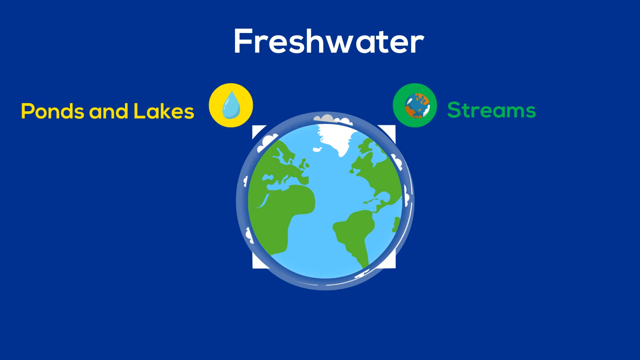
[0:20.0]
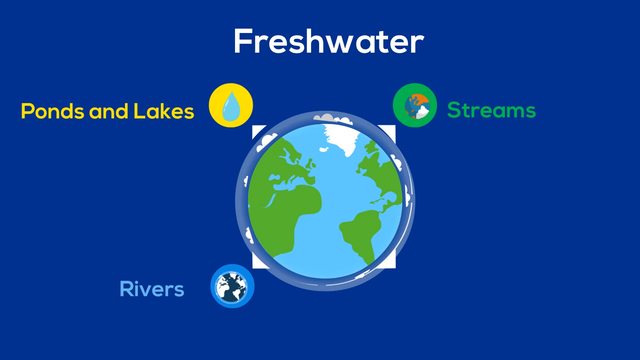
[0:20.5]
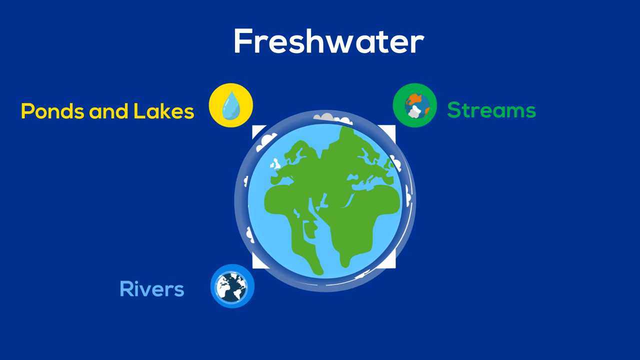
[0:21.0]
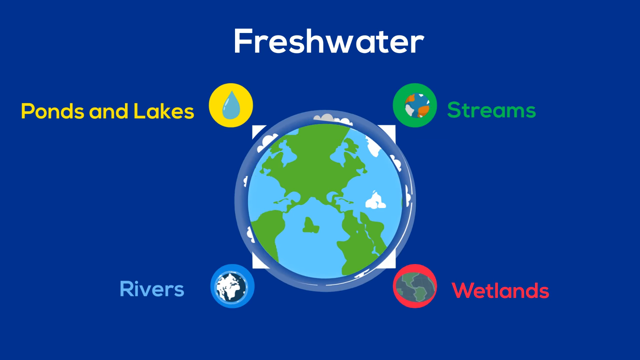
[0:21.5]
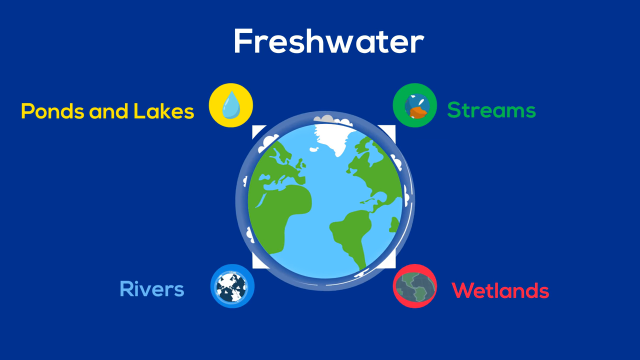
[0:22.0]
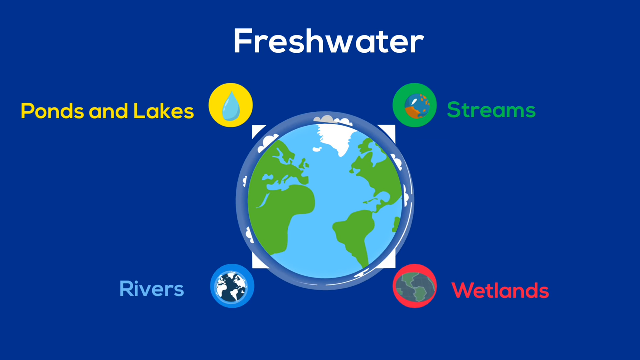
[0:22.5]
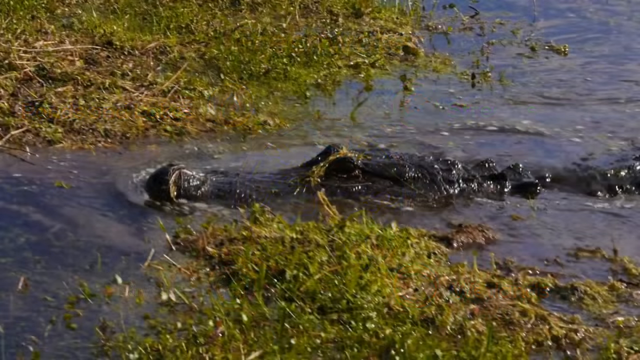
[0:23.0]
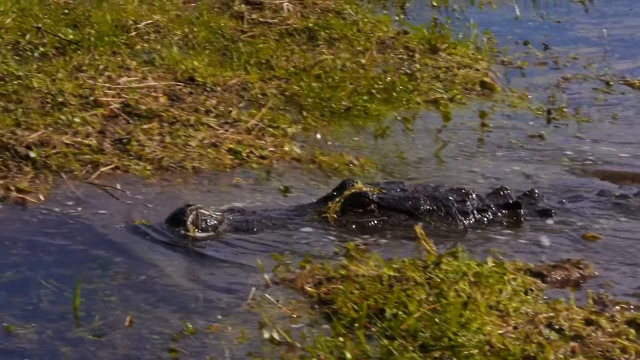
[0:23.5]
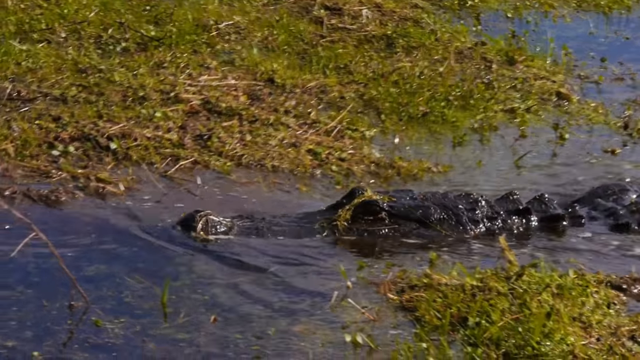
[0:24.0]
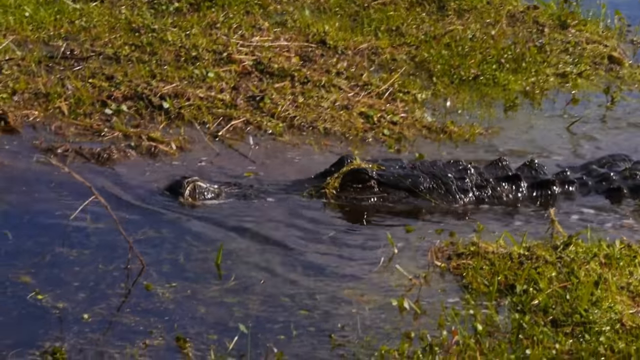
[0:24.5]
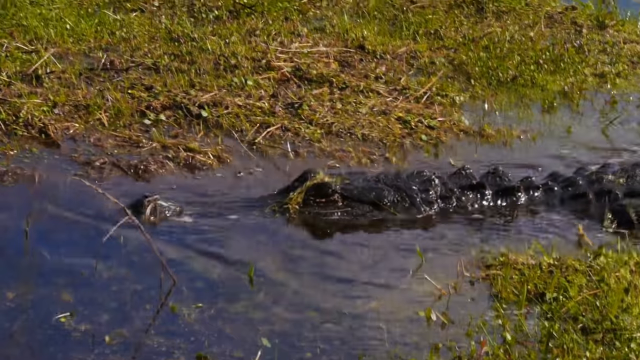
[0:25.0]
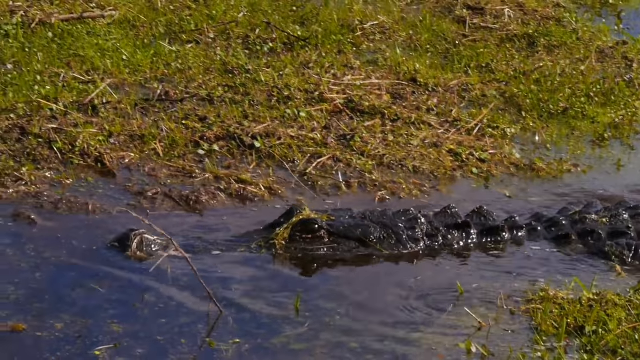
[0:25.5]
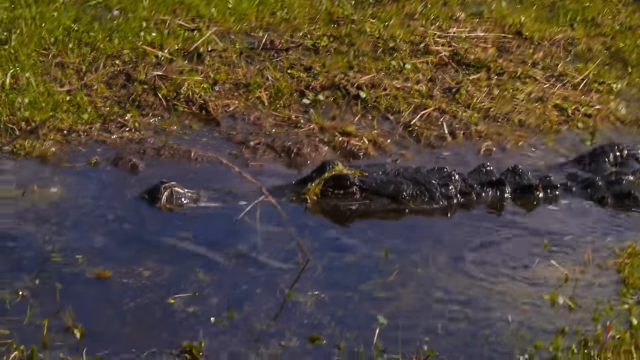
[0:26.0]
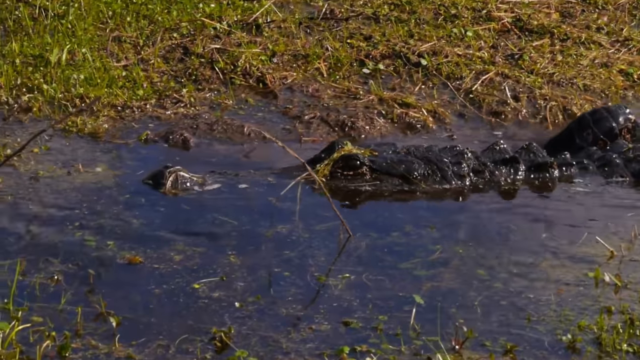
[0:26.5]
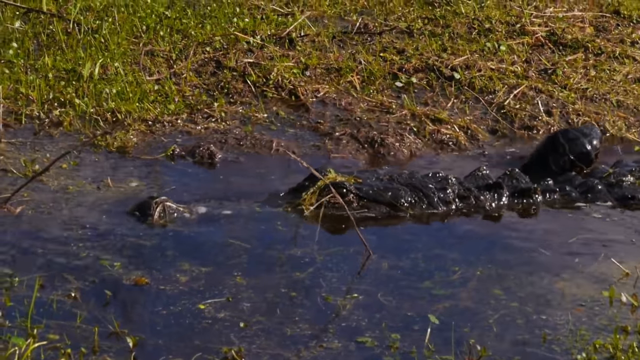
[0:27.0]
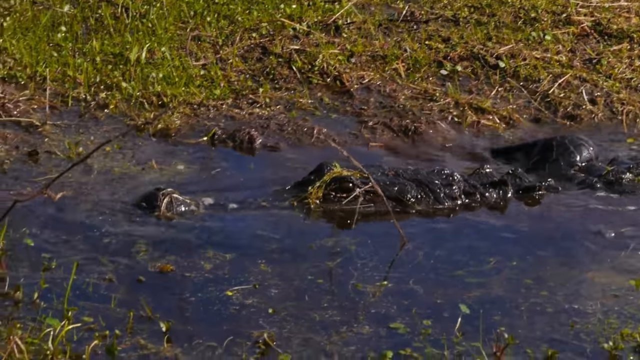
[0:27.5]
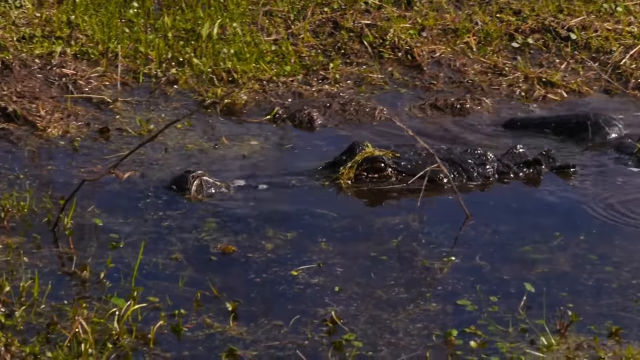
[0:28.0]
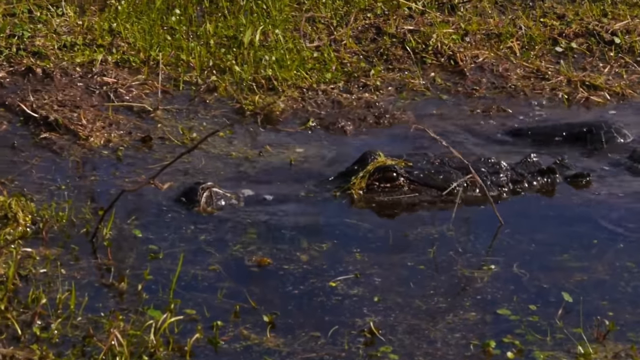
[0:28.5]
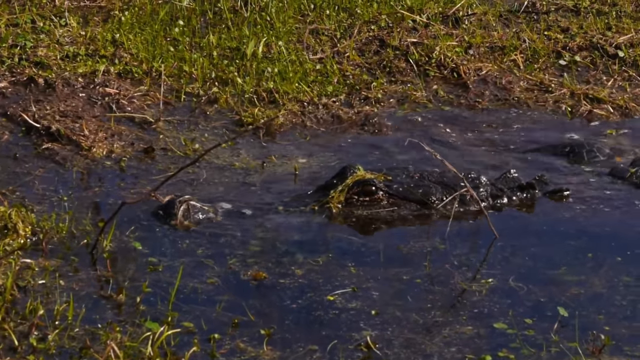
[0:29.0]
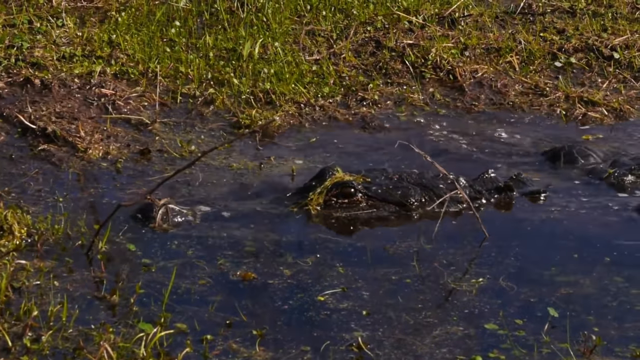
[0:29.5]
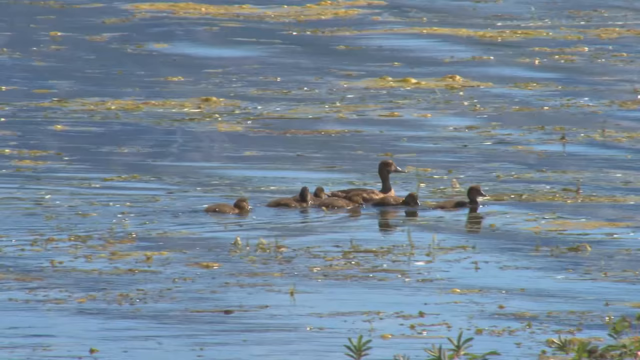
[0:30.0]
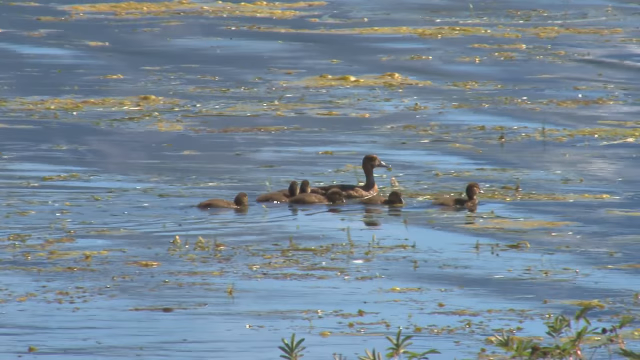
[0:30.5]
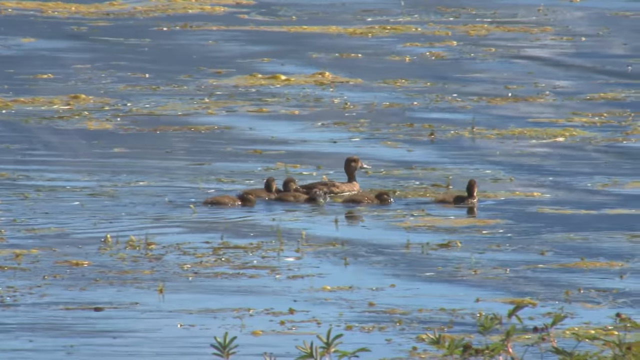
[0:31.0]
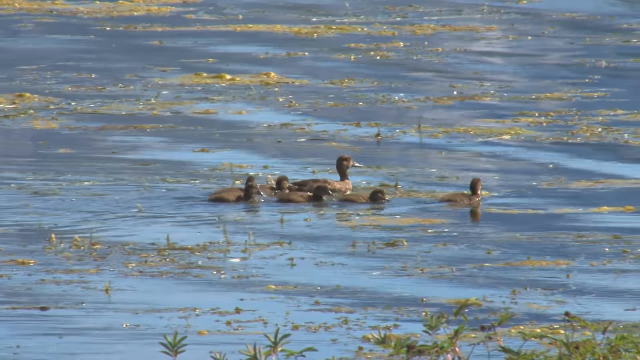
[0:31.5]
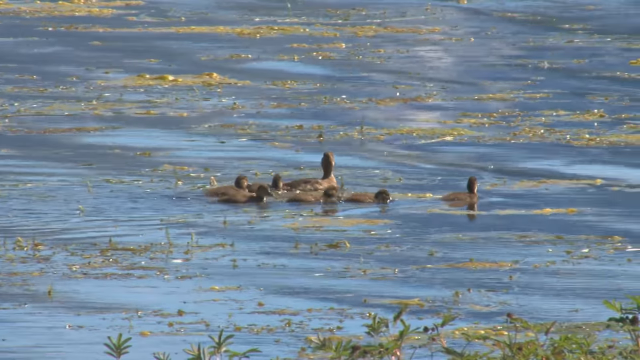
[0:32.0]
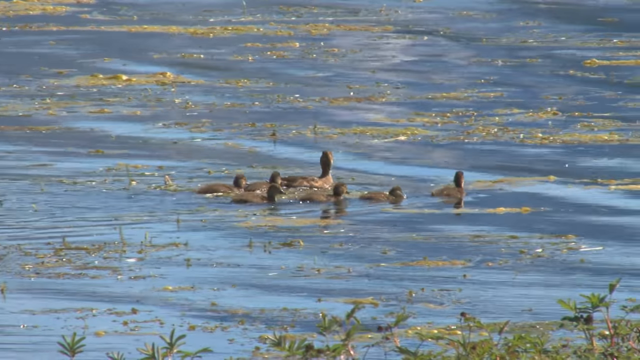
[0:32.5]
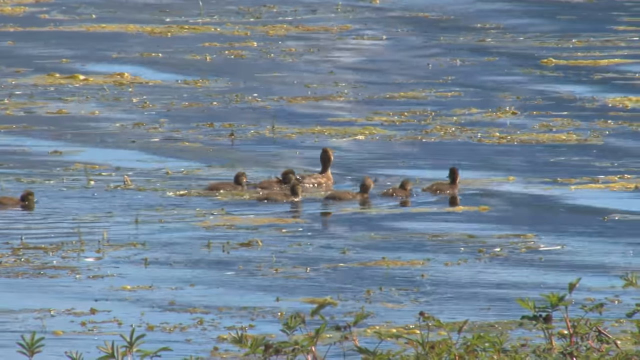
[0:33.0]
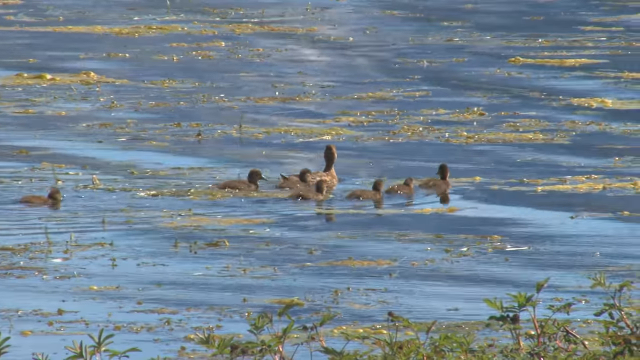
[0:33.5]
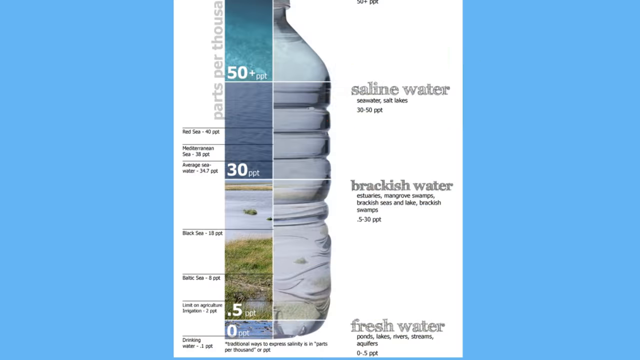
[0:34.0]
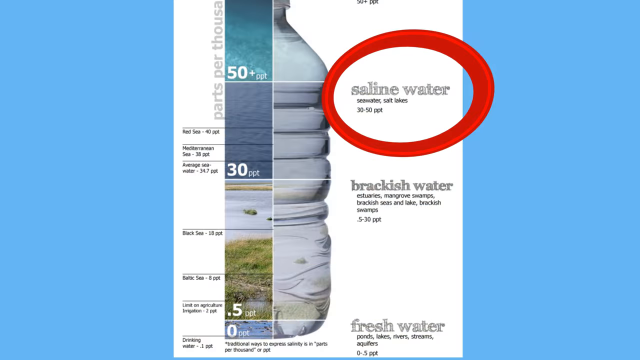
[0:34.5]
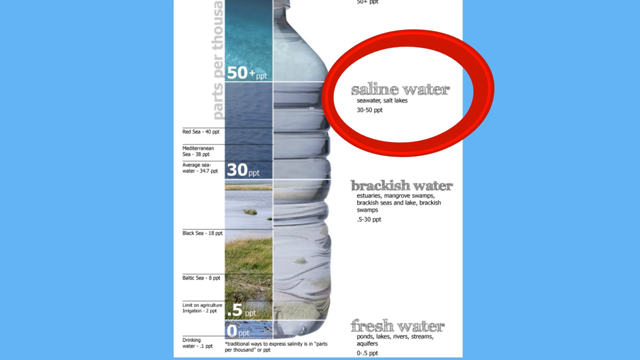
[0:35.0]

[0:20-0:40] A crocodile or alligator is in the water, looking as if it is swimming in thick, vegetation-covered water. Ducks swim in what looks like a pond, or possibly a lake, with dark water and a lot of vegetation growing on it. Saline water is shown as 50% of the earth. A chart on a big jug of water displays the different types of the earth's water, such as saline water, fresh water and brackish water. The earth's wetlands also appear.